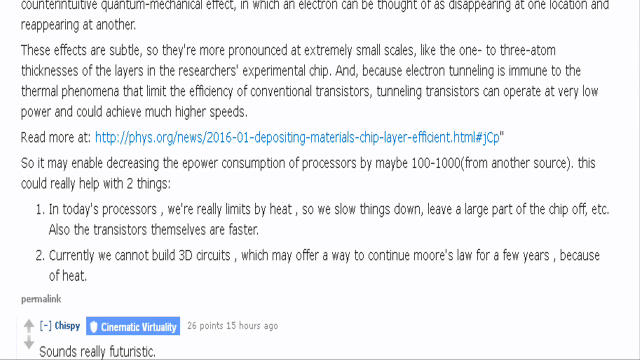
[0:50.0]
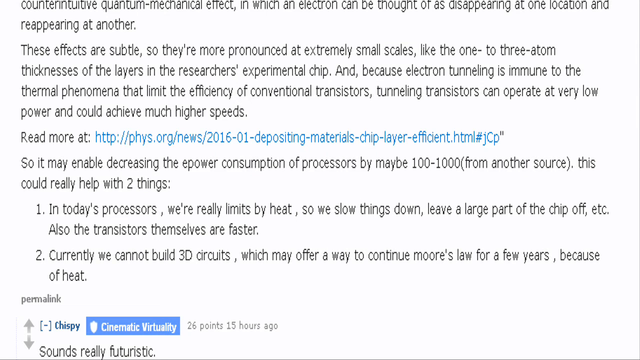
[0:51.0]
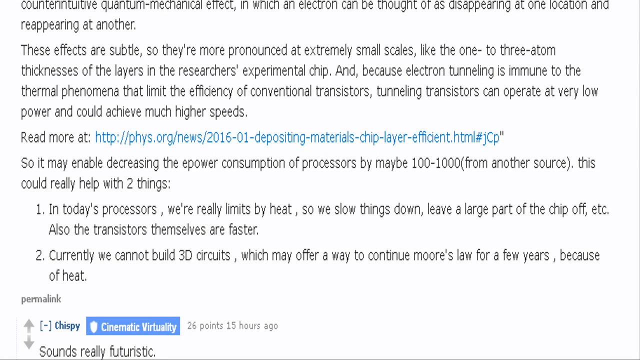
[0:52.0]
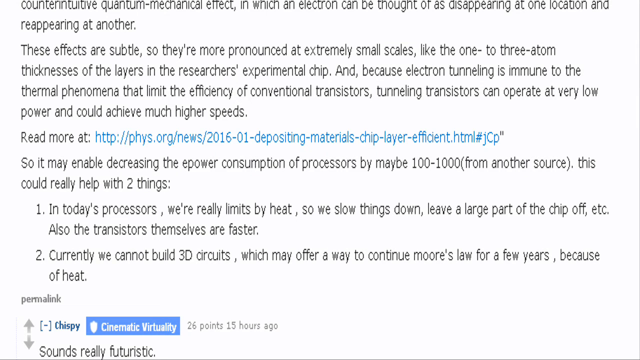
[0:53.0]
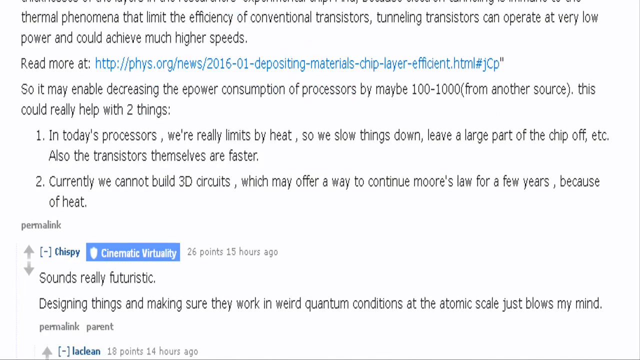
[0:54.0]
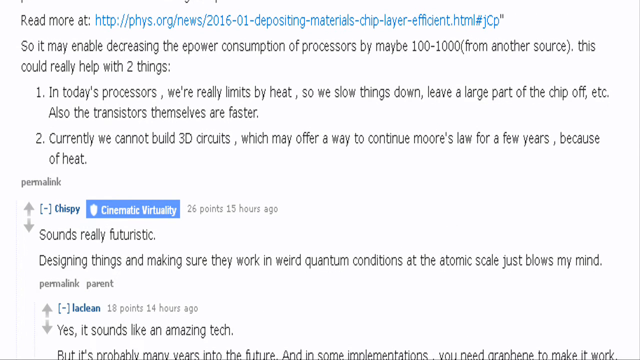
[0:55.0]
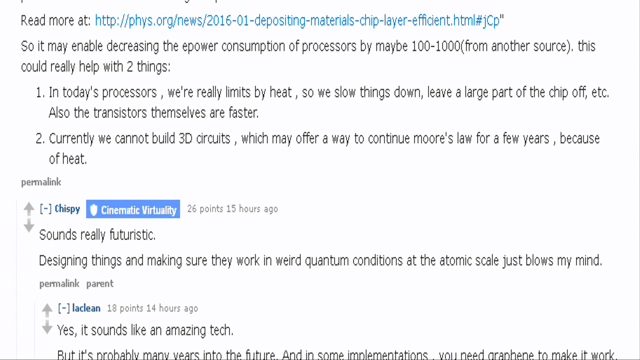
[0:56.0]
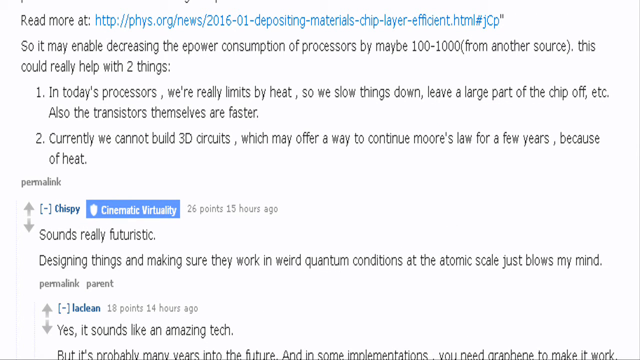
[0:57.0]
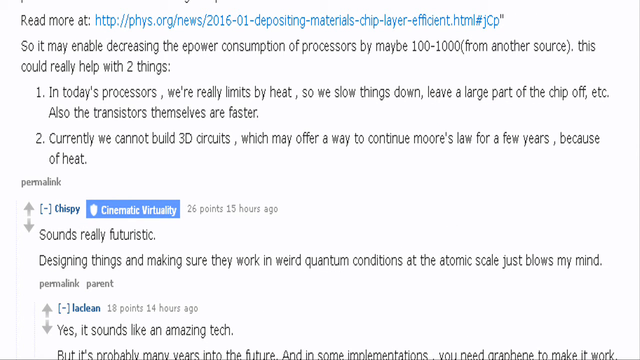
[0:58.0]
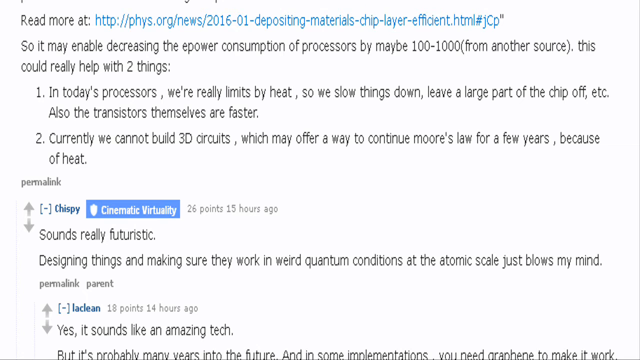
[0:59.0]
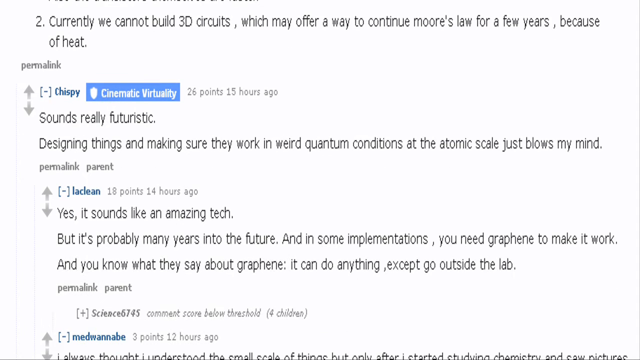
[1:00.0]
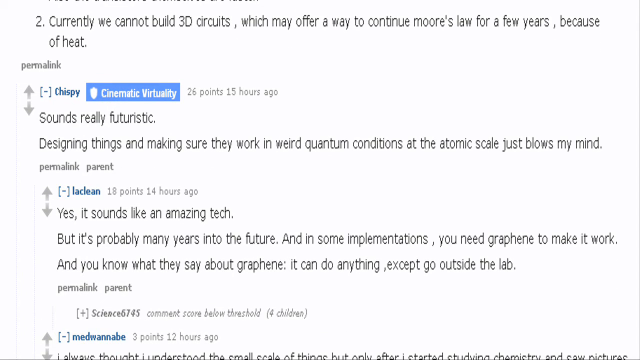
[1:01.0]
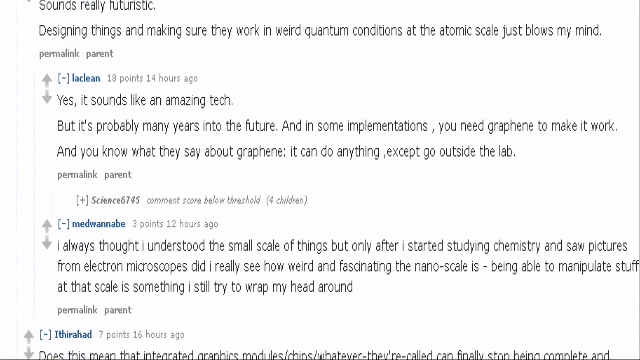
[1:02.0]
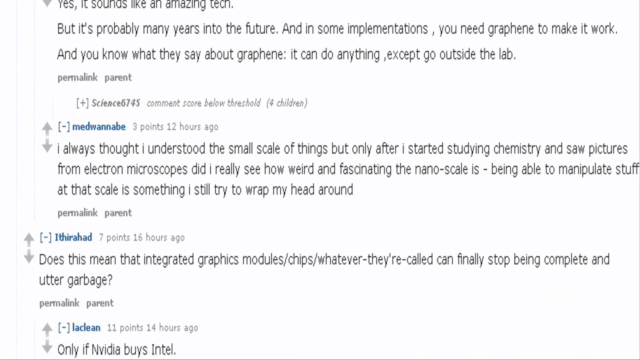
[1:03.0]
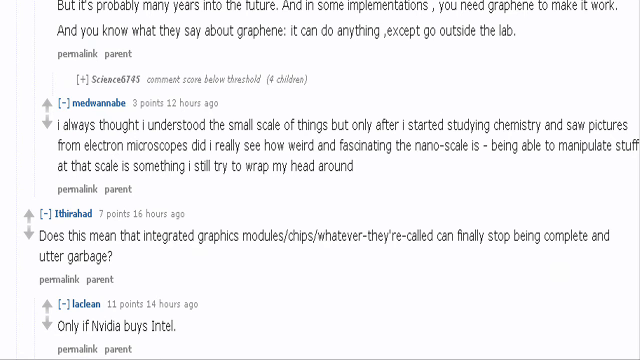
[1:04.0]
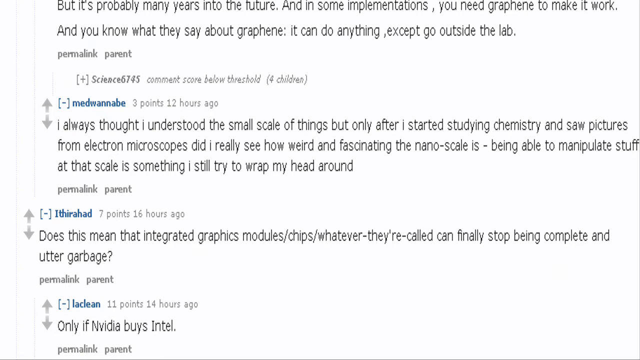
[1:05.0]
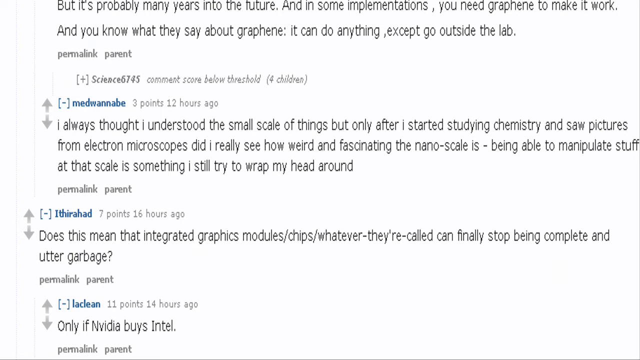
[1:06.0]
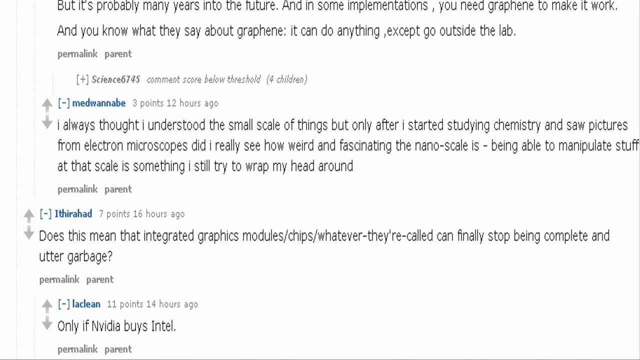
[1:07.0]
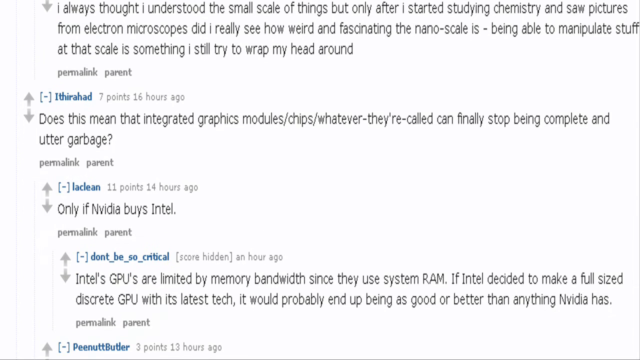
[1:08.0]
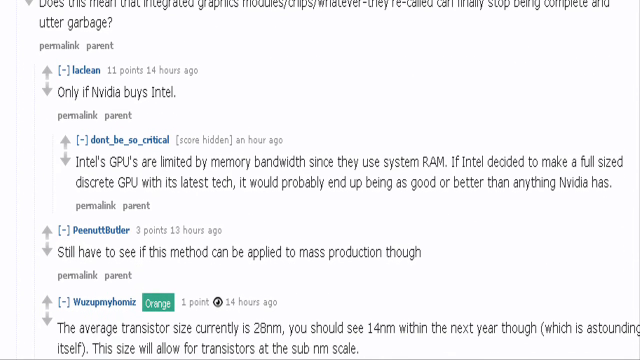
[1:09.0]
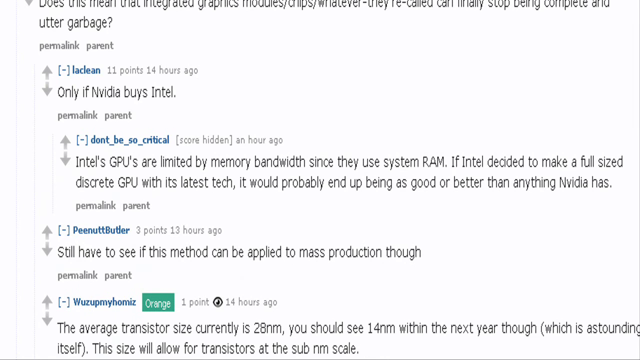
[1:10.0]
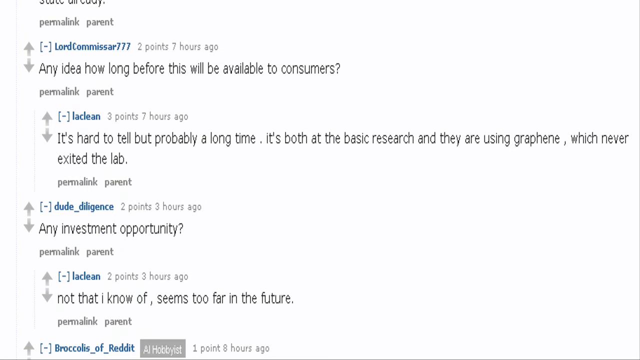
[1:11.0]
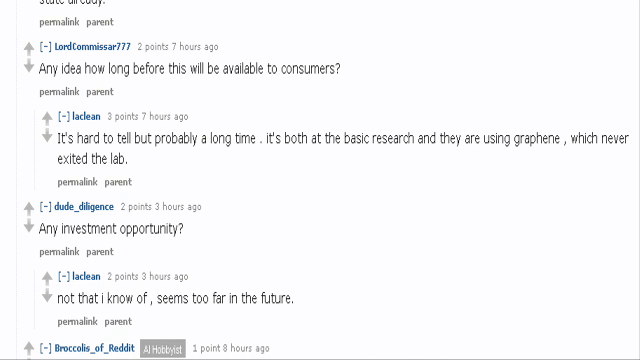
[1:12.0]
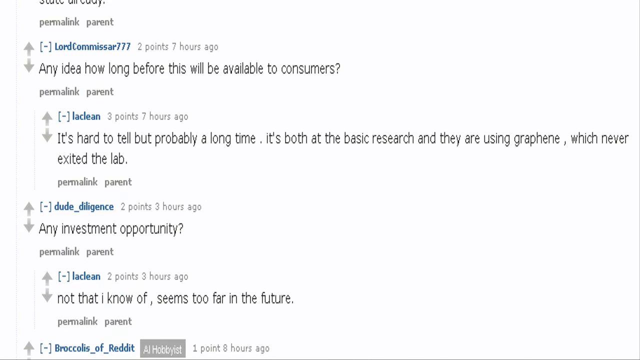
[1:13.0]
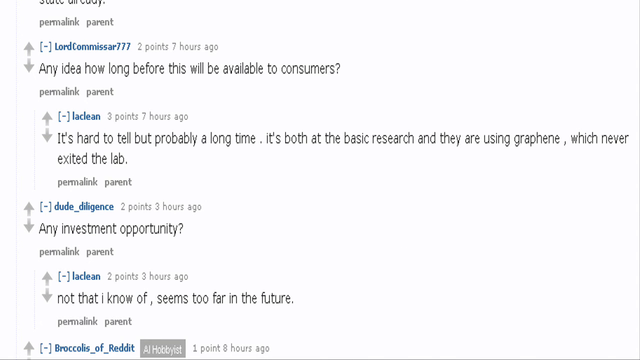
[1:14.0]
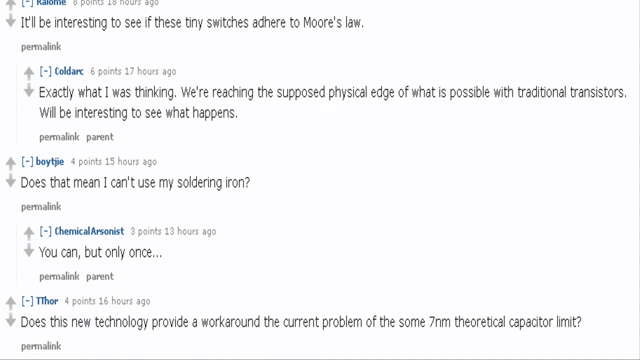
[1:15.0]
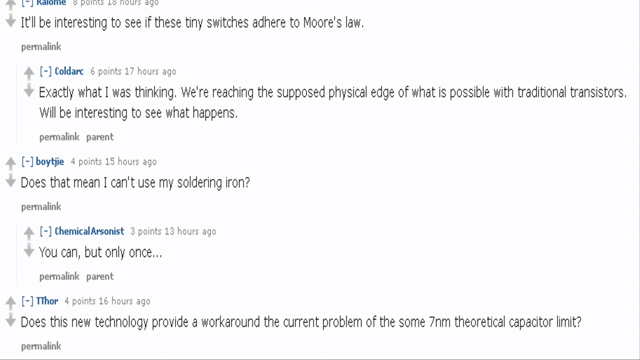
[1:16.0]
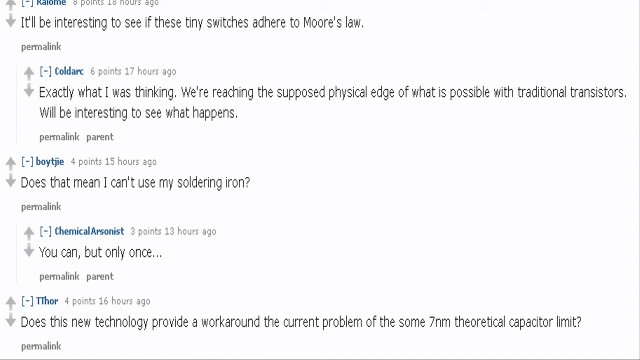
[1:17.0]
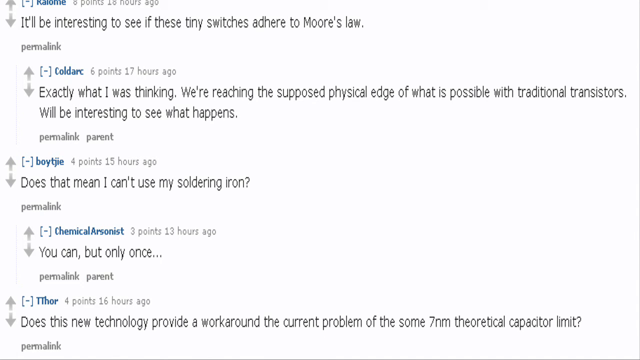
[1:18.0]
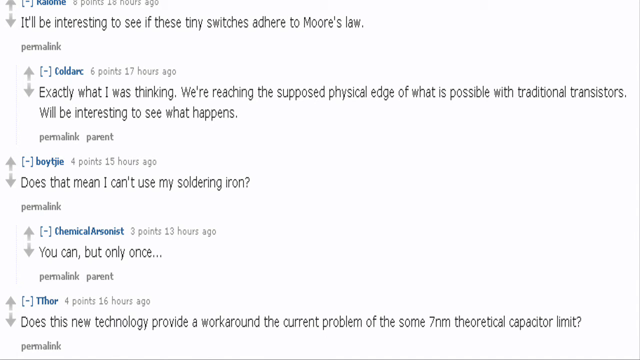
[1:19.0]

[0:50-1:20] The view scrolls down through the discussion thread, which is titled "MIT makes chip breakthrough, which will lead to atom thick chip" and ultra thin computers. The commenters seem to be talking about quantum tunneling being effectively implemented, and about how the ultra thin approach of depositing just a few atoms at once could lead to chip breakthroughs and different types of circuits, with some mentioning 3D circuits. Mostly they seem to discuss this manufacturing process and how it can make chips that use quantum tunneling and are much more efficient and small, allowing much smaller ICs. Some commenters begin to call it kind of futuristic and say nothing really works here.